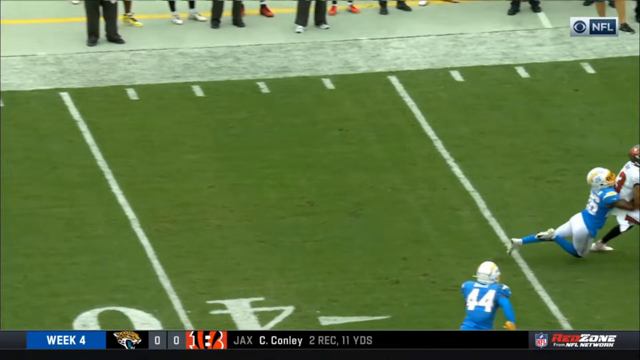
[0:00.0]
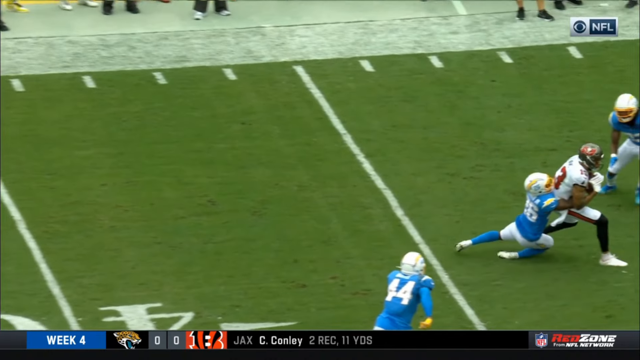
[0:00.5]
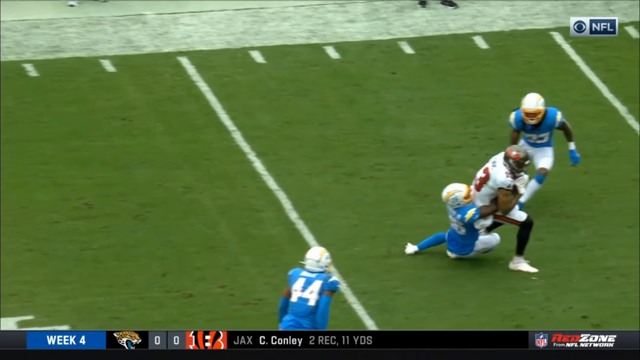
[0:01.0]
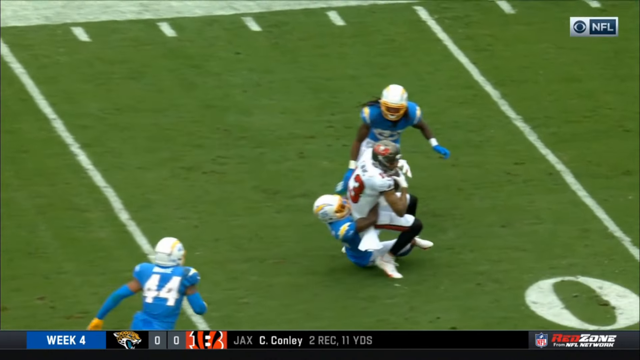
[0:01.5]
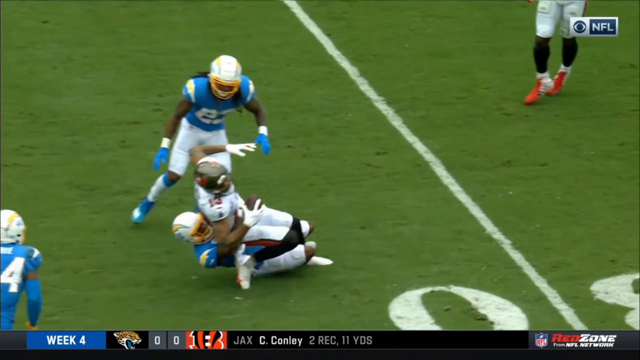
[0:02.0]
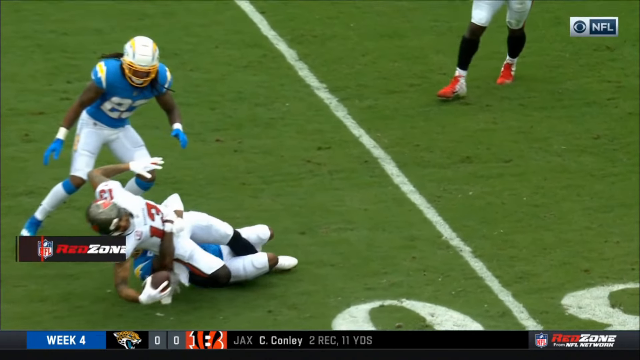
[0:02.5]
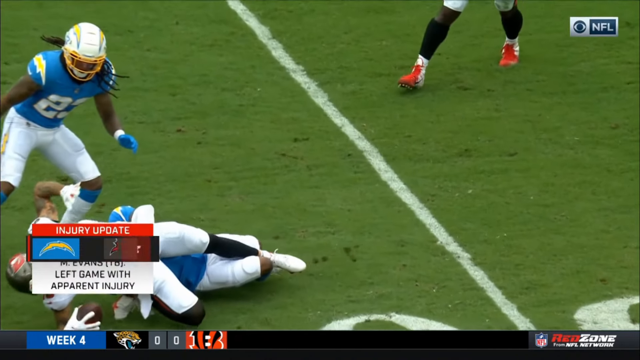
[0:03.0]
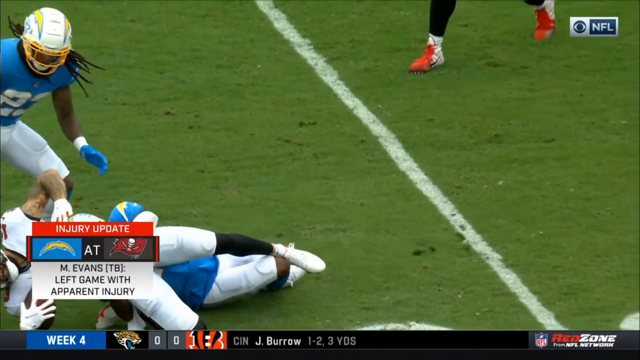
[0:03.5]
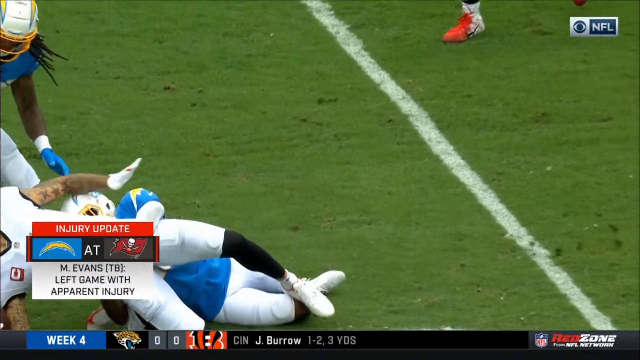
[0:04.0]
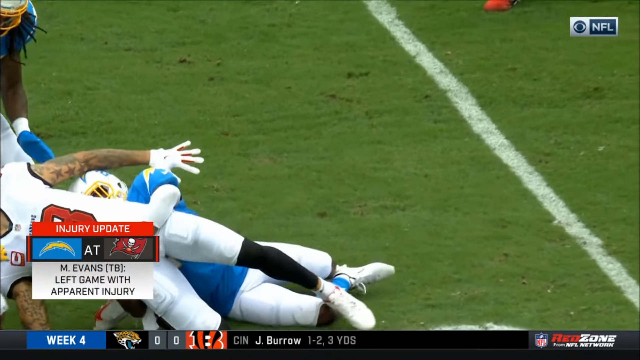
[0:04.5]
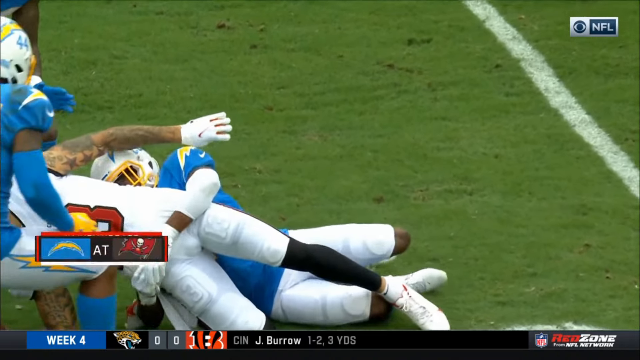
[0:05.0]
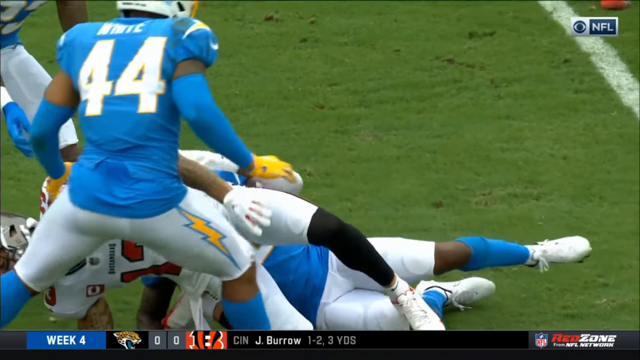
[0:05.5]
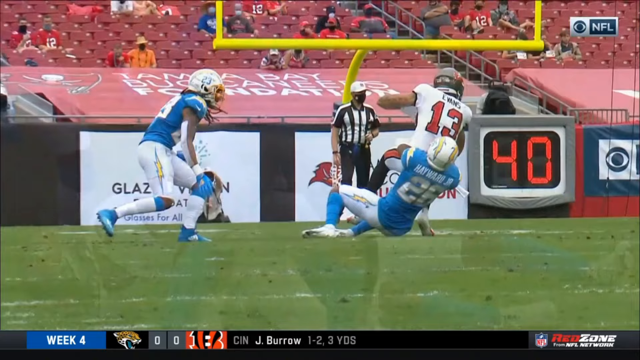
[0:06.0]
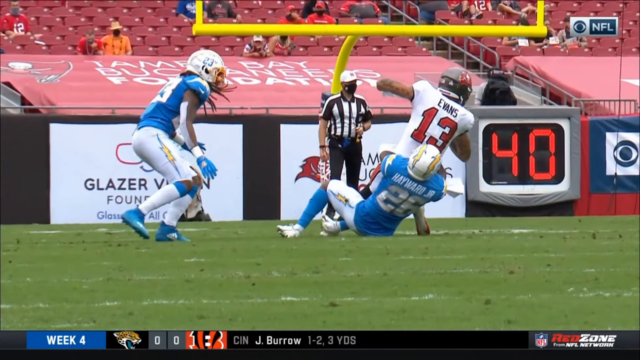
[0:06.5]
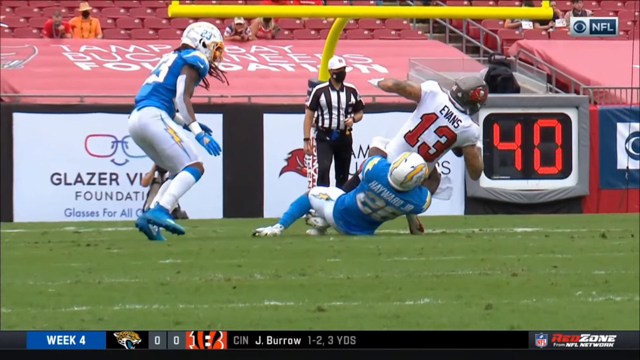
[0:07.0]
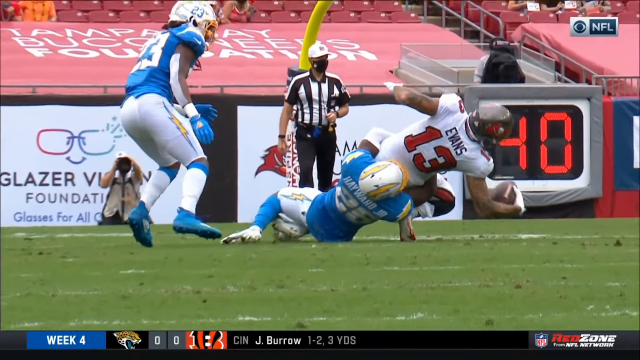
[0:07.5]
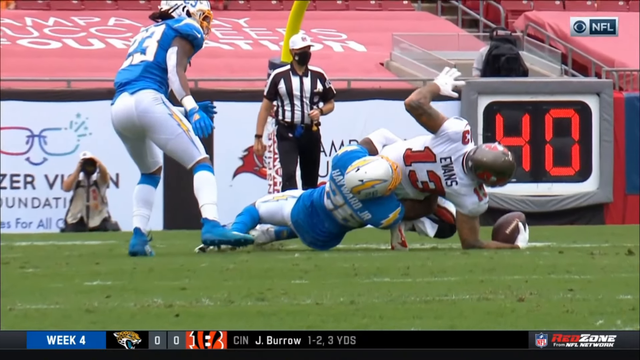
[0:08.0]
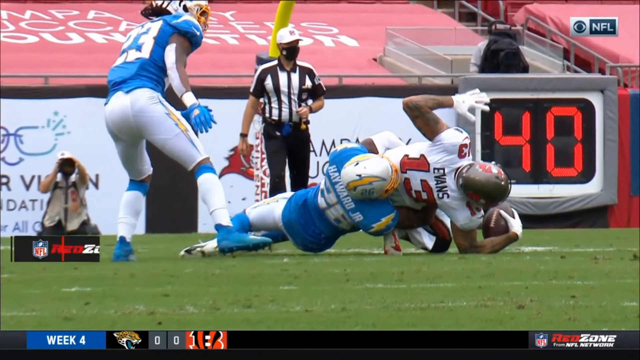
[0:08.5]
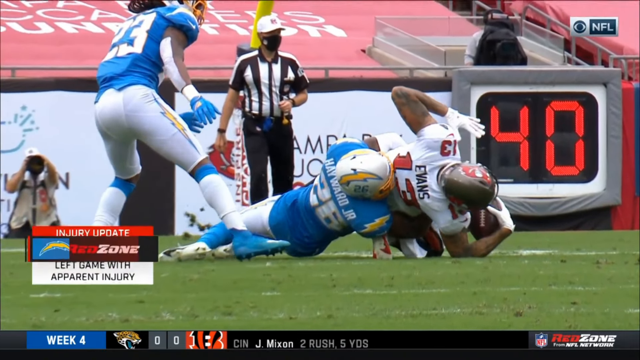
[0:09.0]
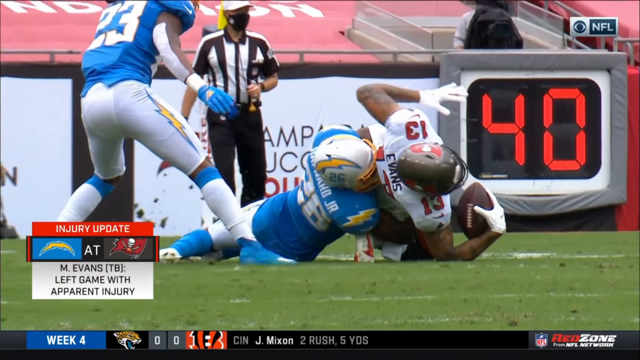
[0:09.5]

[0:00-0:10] A football game in week four is on screen, apparently Jacksonville against possibly the Cincinnati Bengals, though the teams are unclear. An injury update appears for a player with the last name Evans, stating that he left the game with an apparent injury. The injury seems to be shown: during a tackle, his leg appears to go back under him. A graphic shows C Conley with two receptions for 11 yards. The player goes down in the red zone. What may be another injury update appears, possibly the same one, naming the two players, Hayward Jr. against Evans, and again stating that he left the game with an apparent injury. Something is clearly hurt from the tackle, probably his back or leg, possibly his ankle.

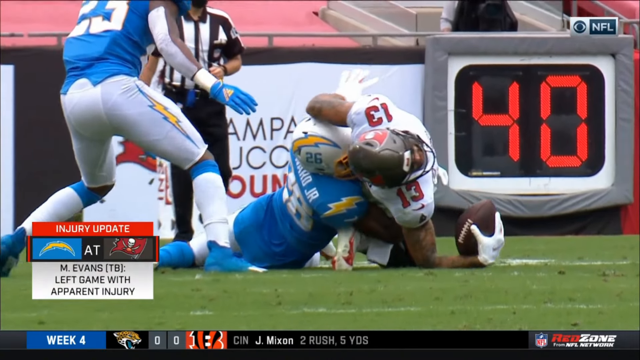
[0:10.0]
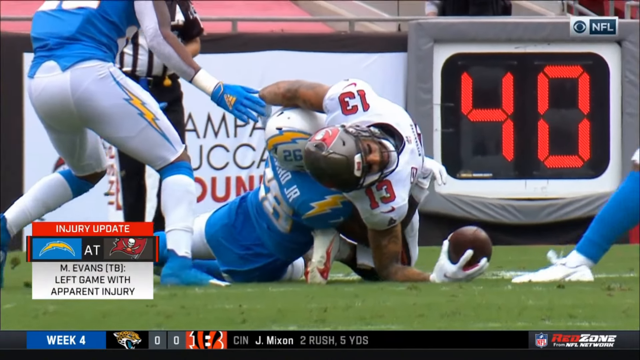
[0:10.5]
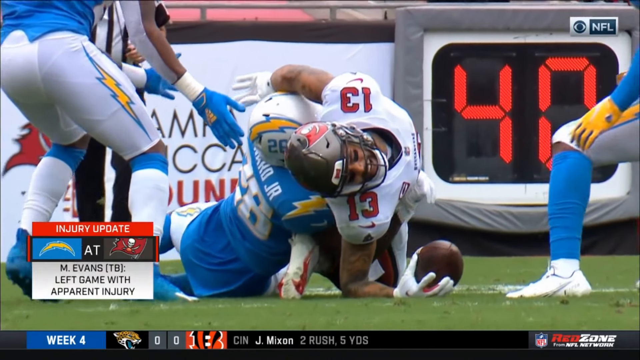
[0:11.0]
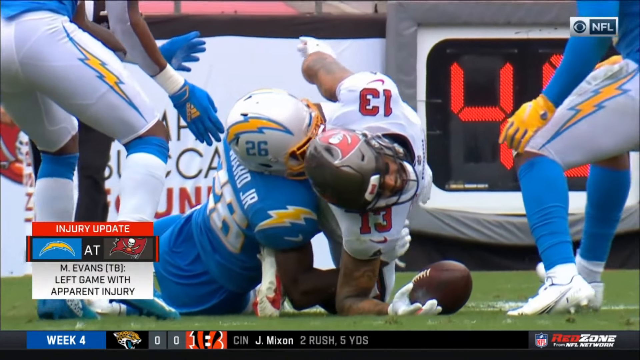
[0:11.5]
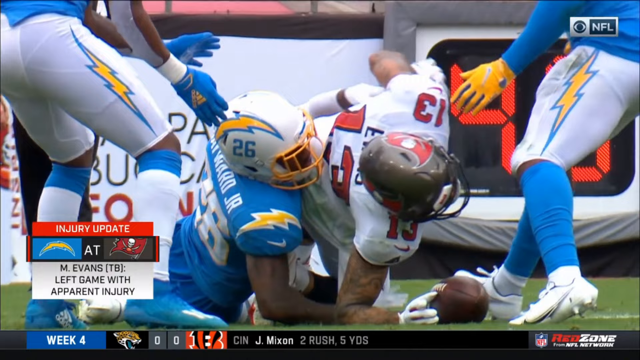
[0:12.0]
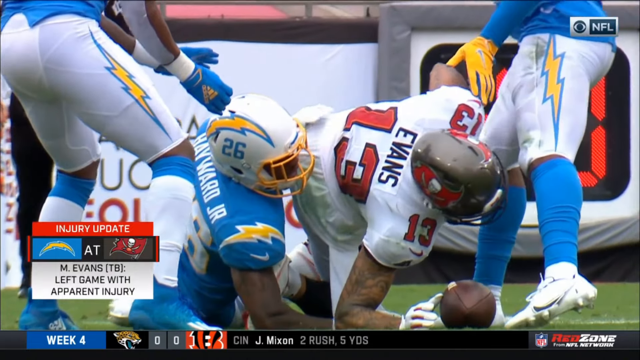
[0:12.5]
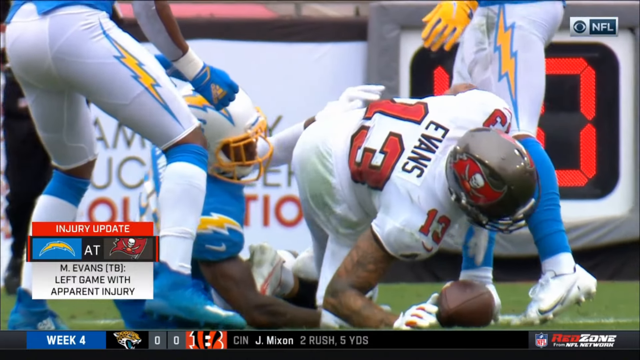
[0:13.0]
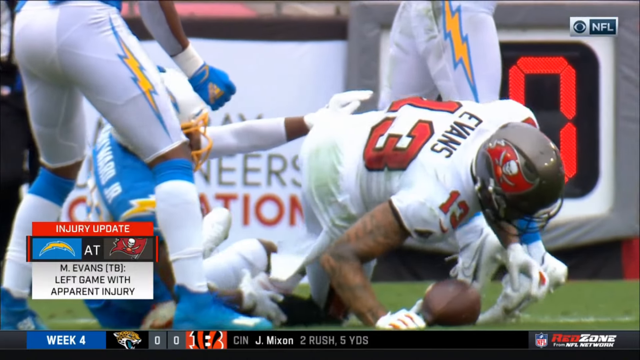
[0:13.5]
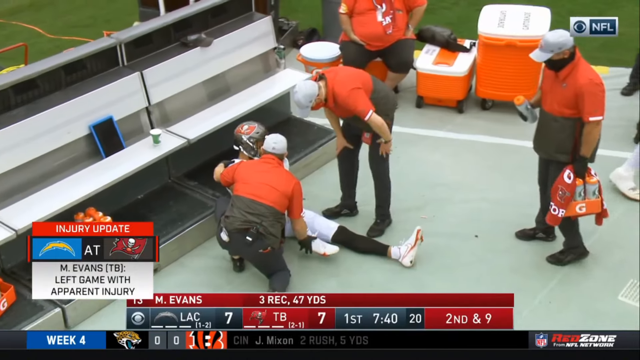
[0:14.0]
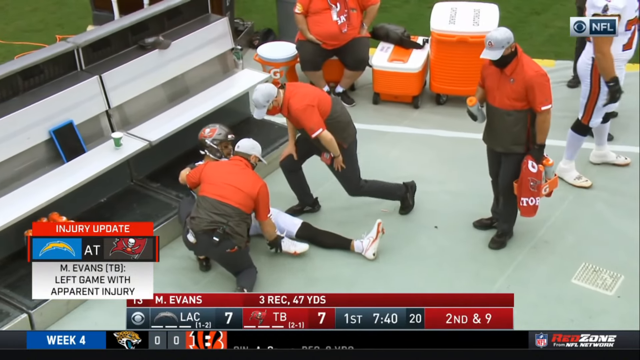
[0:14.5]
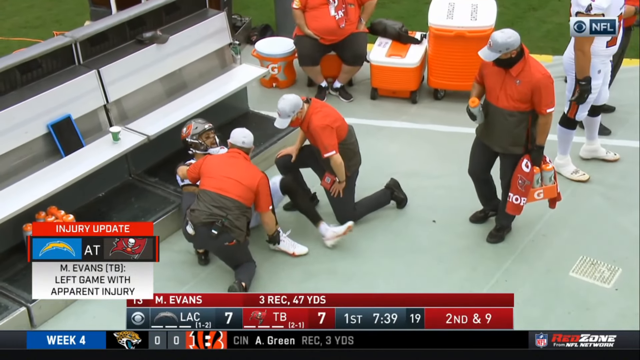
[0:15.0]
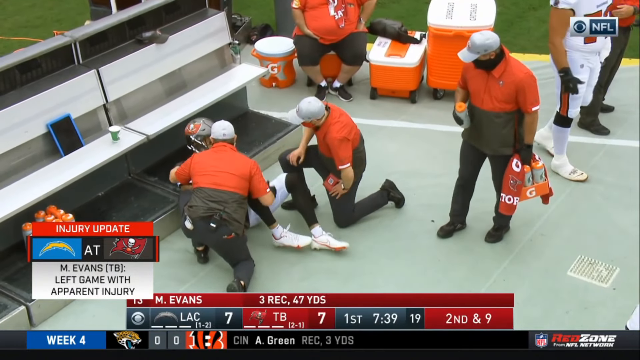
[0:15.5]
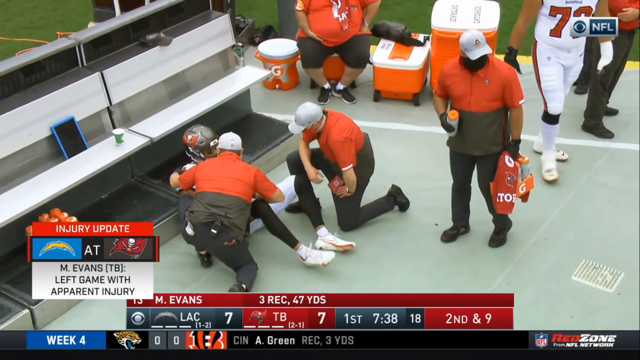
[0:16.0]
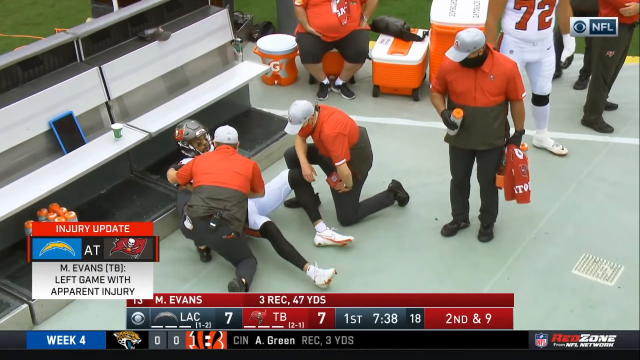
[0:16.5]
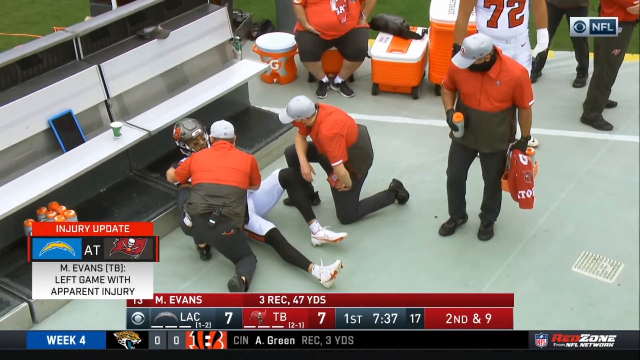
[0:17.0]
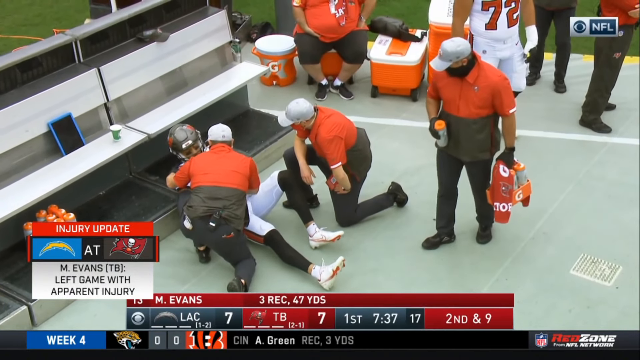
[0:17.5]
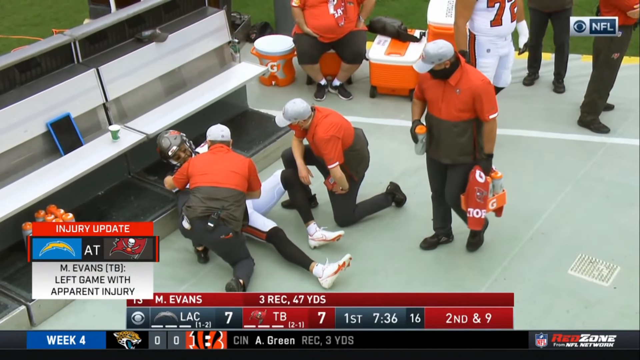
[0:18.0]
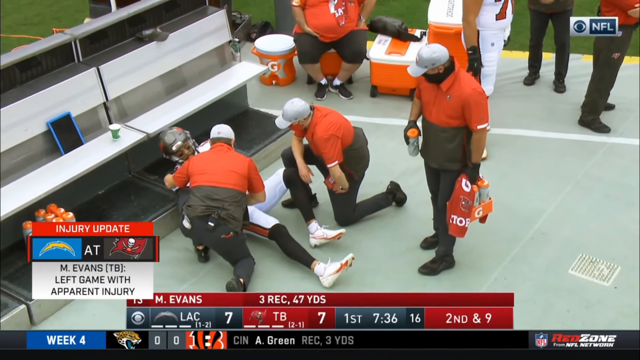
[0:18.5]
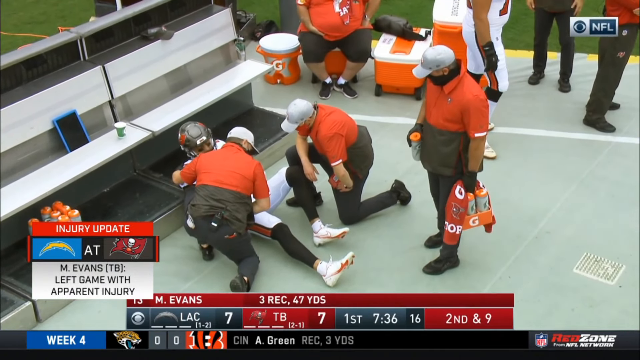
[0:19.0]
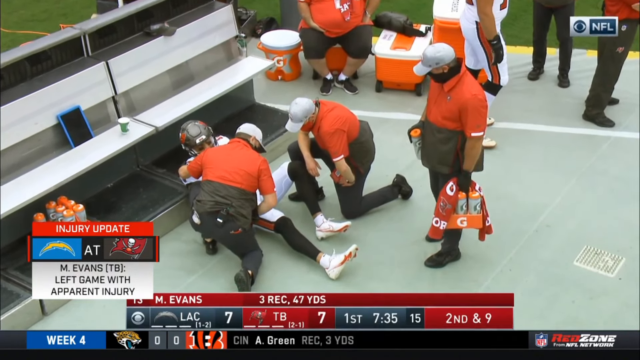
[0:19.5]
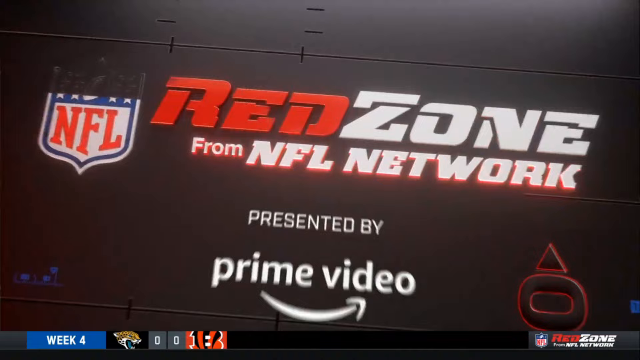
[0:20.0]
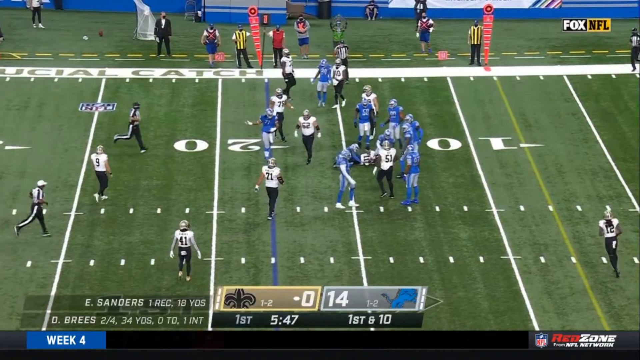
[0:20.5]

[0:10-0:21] M. Evans is injured on a play, tackled by Hayward Jr., and goes down in obvious pain. He is possibly with the Tampa Bay Buccaneers. A medical crew attends to him on the sidelines, where he is in obvious pain. A graphic shows he had three receptions for 47 yards. The broadcast then goes back to the Saints versus the Lions, with the Lions up 14 to nothing in the first quarter with five minutes and 47 seconds left.